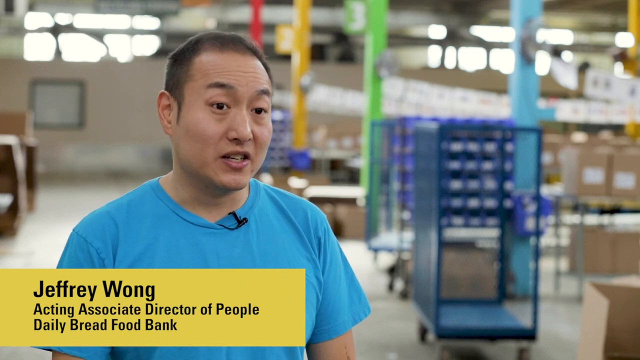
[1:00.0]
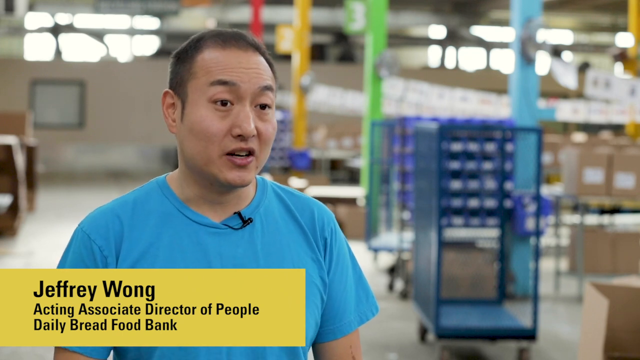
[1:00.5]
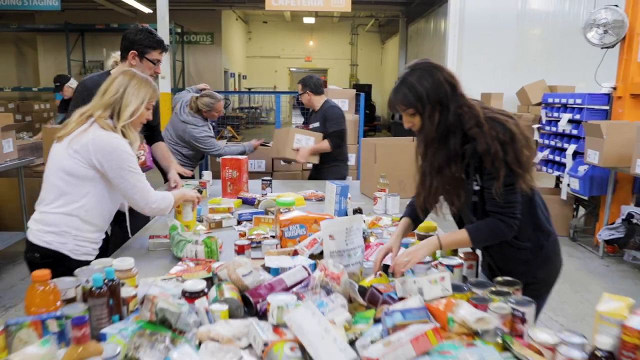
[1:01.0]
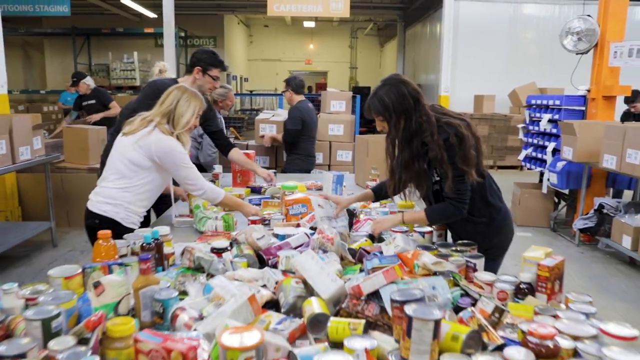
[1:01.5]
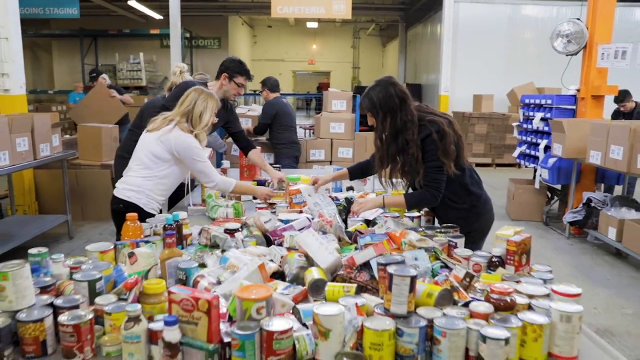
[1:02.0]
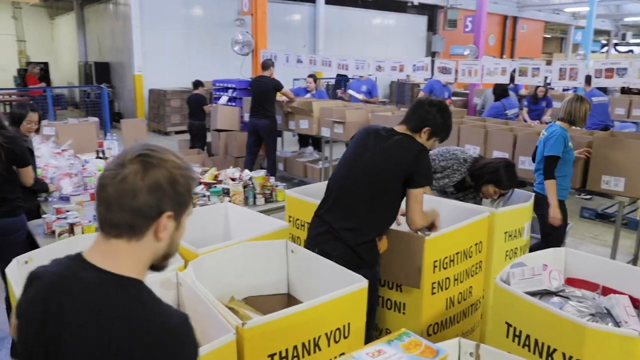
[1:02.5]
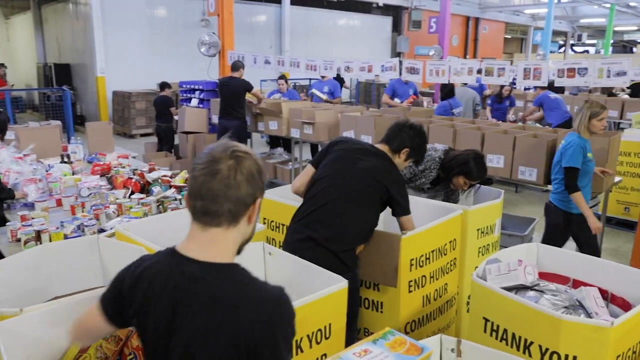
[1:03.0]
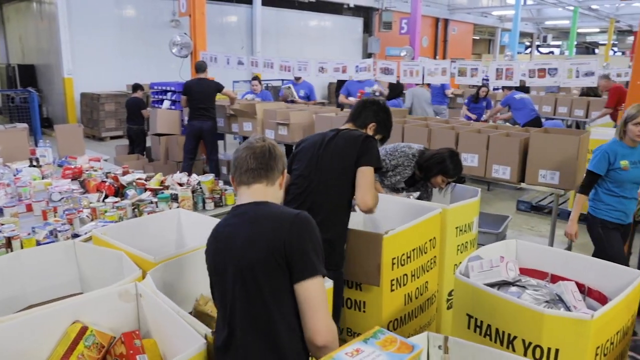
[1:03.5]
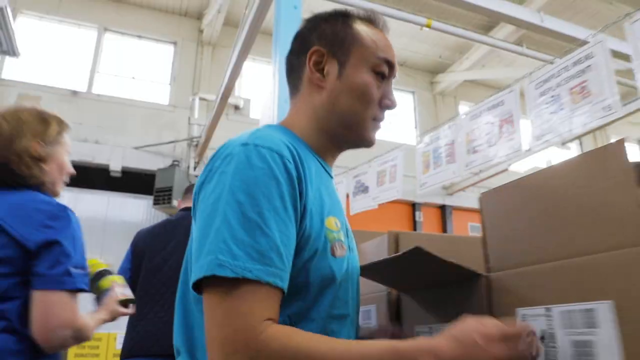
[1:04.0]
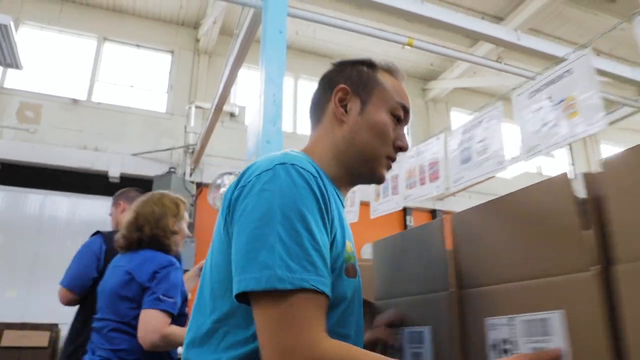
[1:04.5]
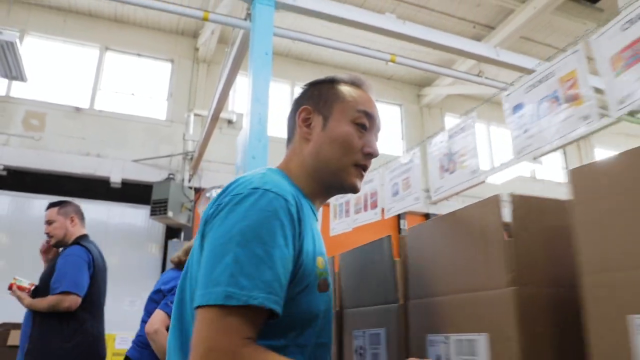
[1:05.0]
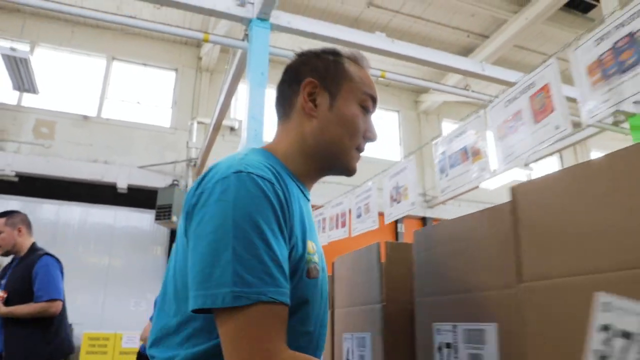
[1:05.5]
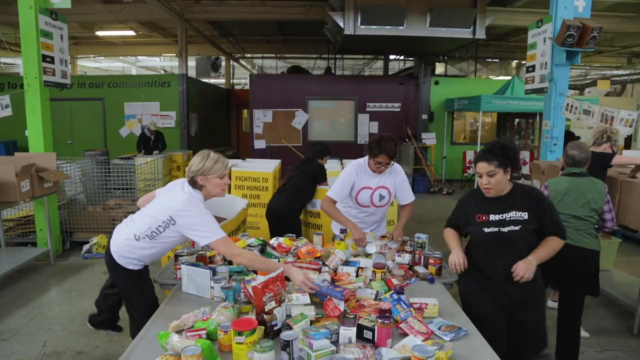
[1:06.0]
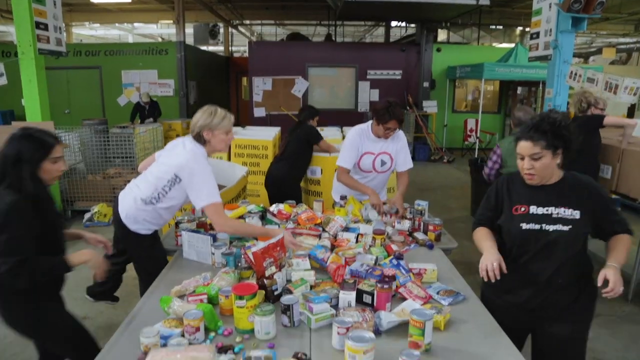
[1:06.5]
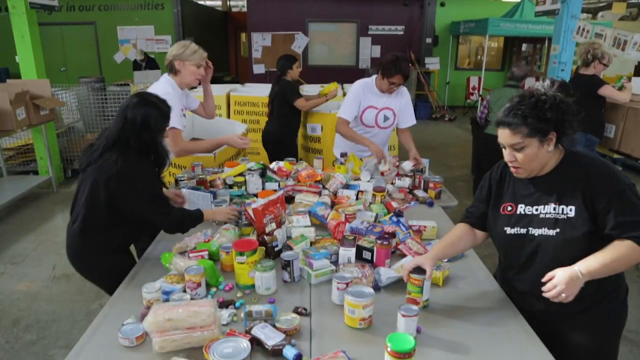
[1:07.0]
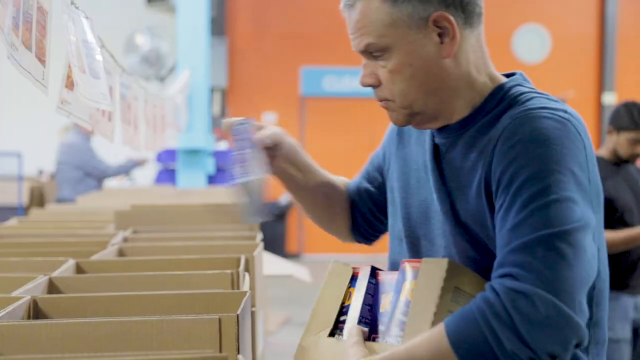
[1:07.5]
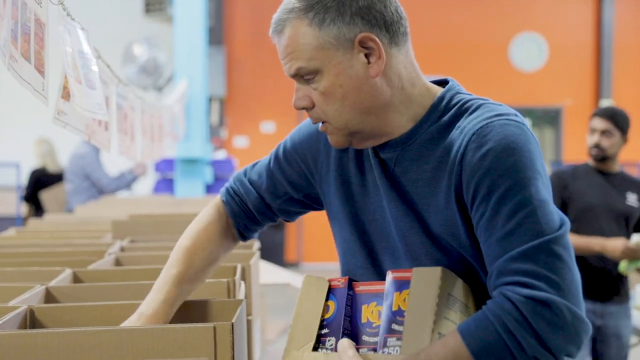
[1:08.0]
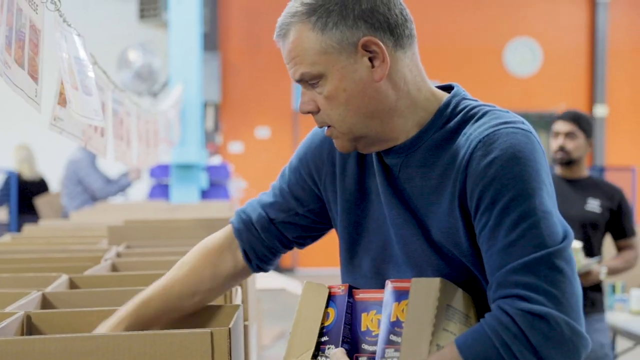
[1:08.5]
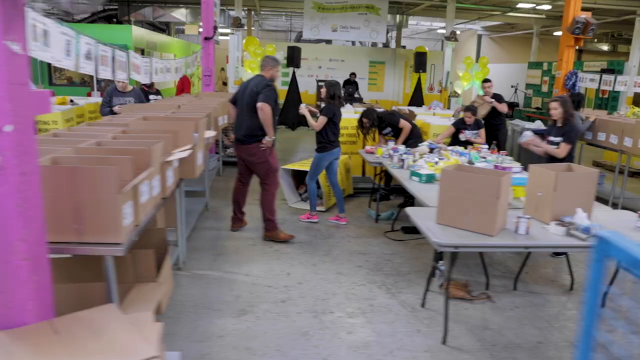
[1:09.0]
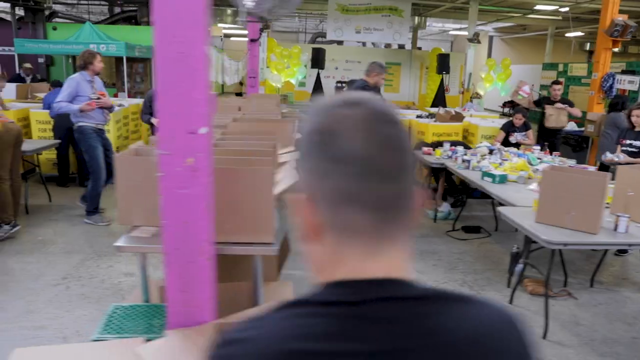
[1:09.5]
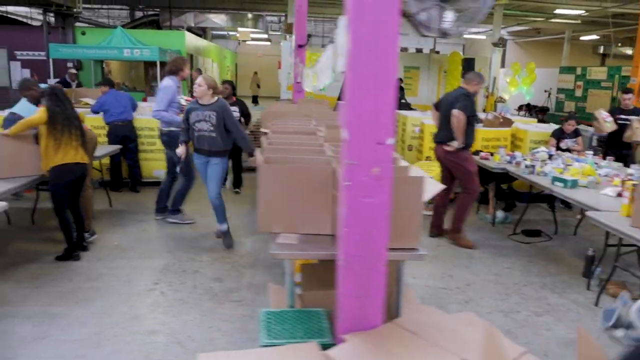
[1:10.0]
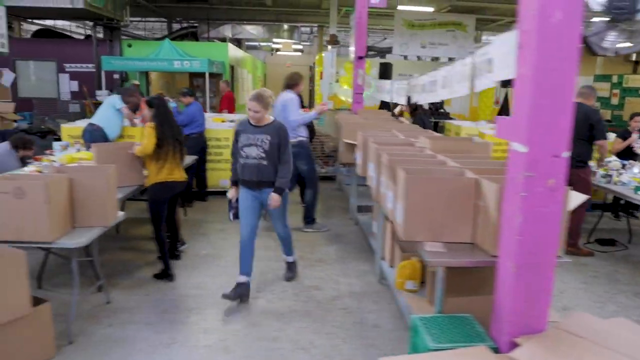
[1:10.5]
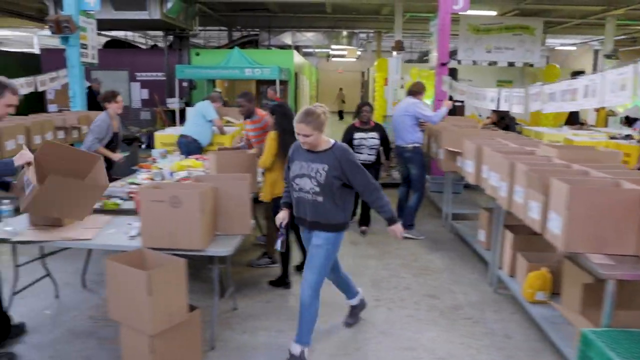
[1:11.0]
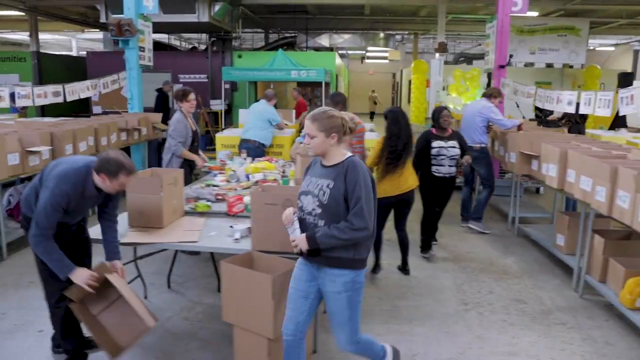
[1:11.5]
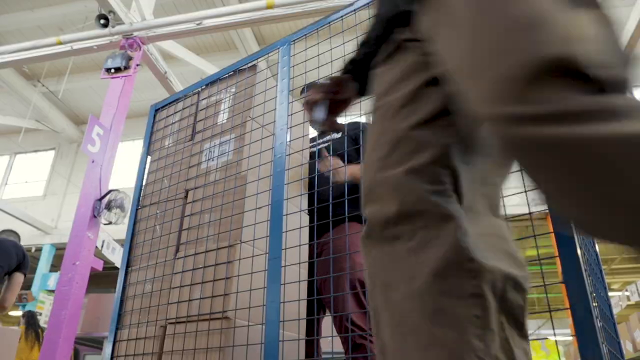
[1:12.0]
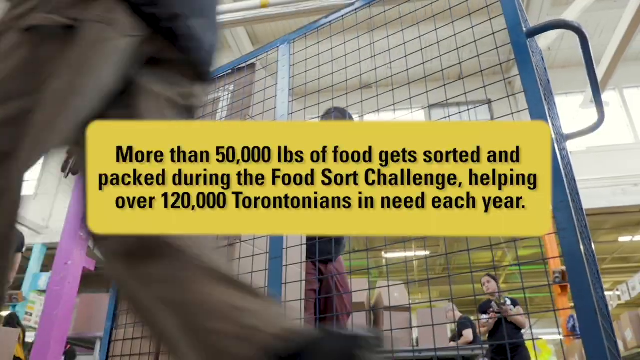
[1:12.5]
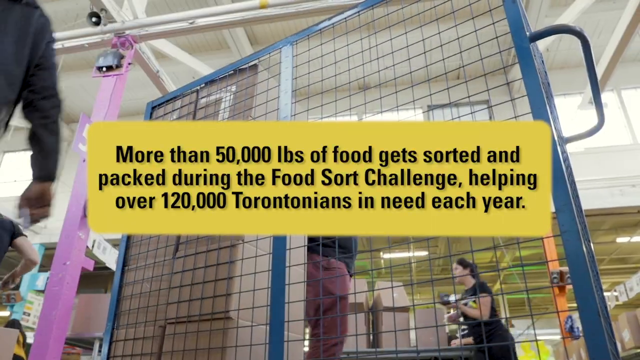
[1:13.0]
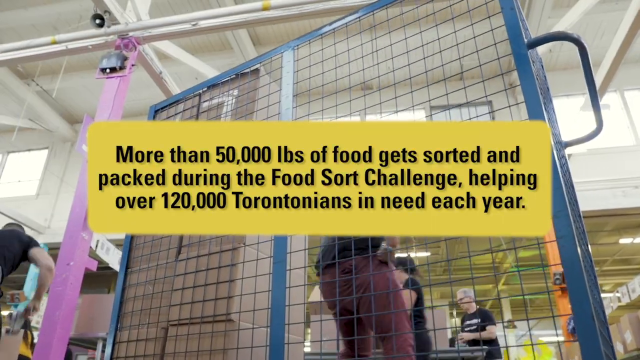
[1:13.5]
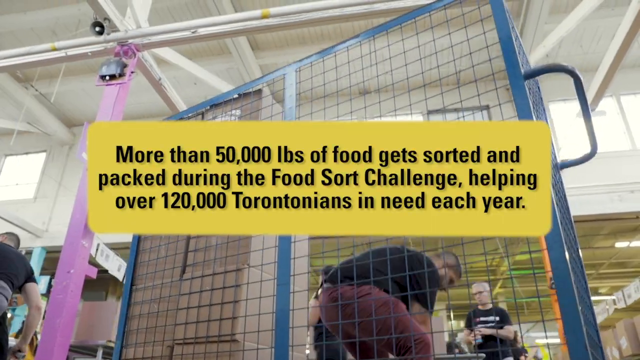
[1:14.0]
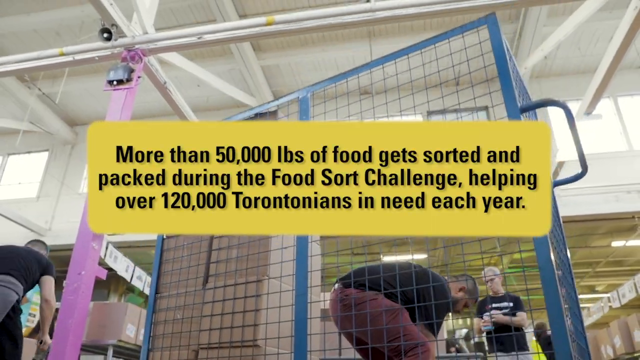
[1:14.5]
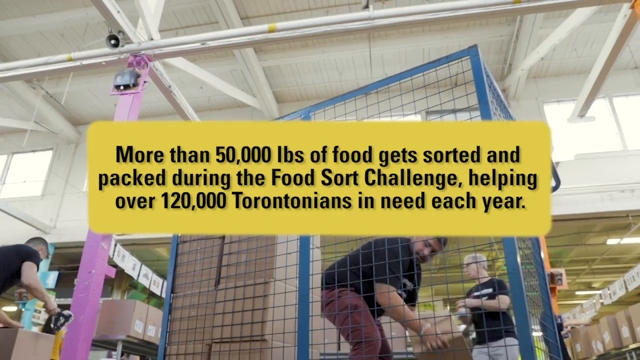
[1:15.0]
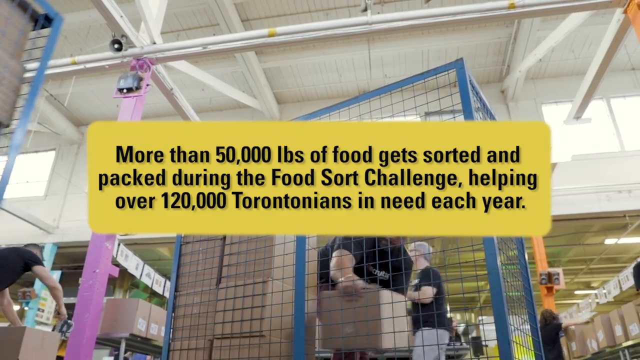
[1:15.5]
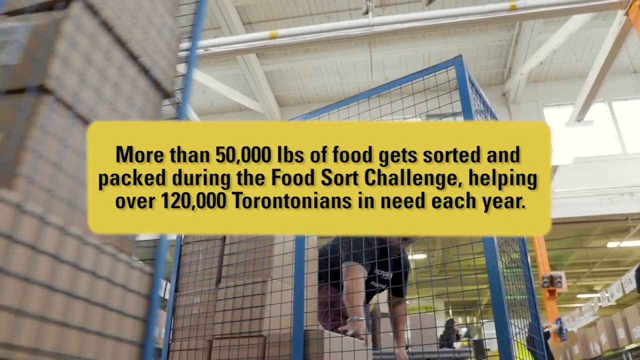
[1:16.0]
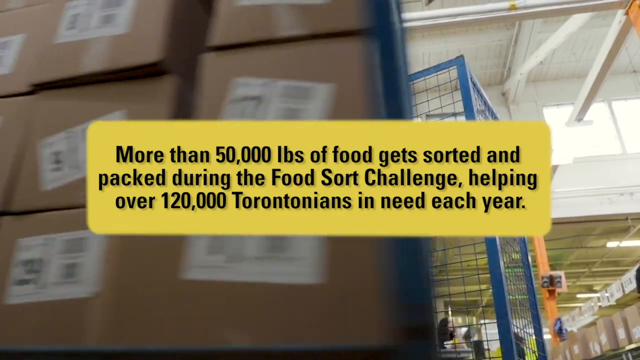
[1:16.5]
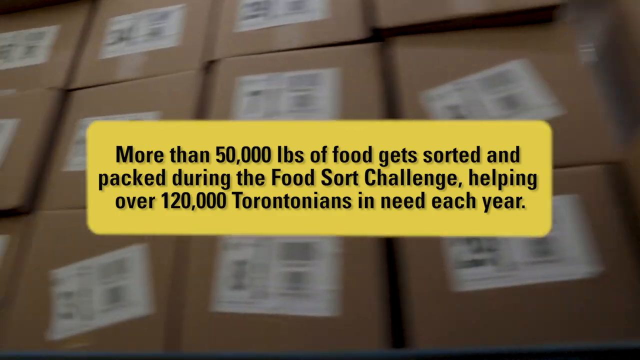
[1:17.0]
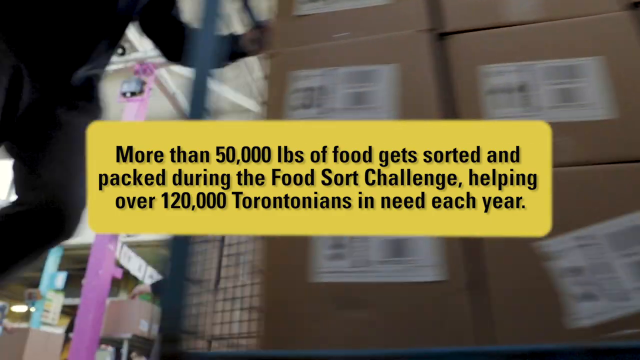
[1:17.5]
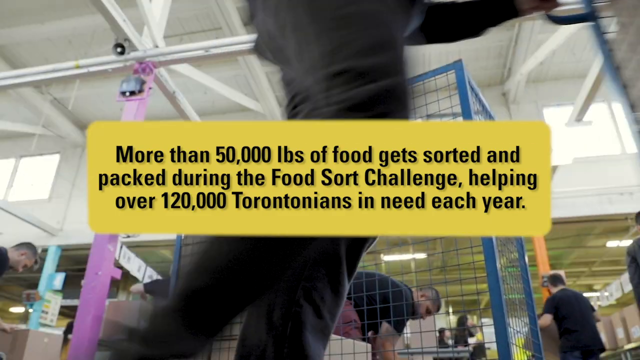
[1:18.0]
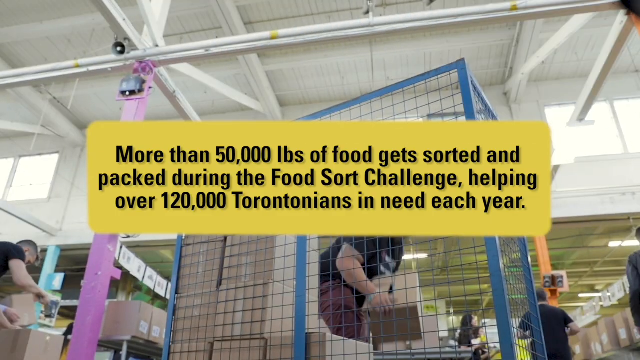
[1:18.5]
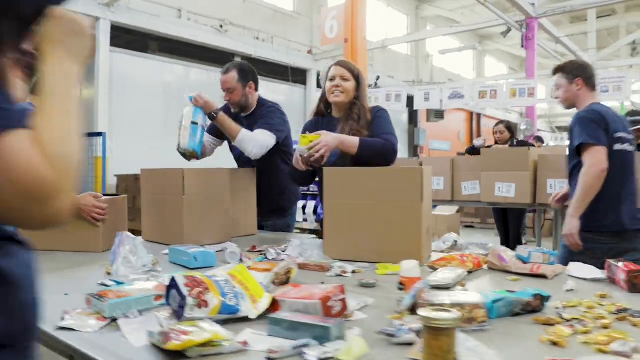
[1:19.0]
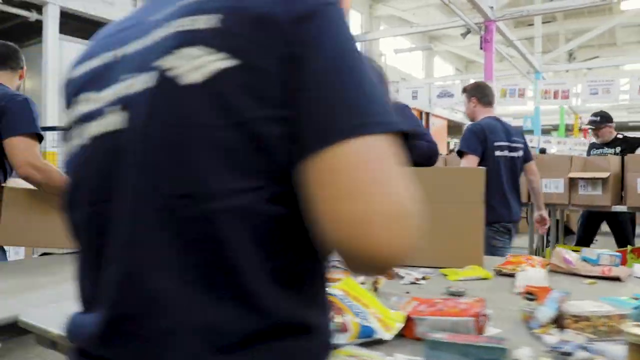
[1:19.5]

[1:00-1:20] An Asian-looking man, who seems possibly of mixed heritage judging by his slightly different eyes and facial structure, wears a light blue short-sleeved shirt with a microphone attached to the bottom front of his collar. In the bottom left corner, black text in a yellow rectangle says "Jeffrey Wong, acting associate director of People Daily Bread Food Bank". He is talking either to the camera or to somebody off camera; it looks like he is being asked a question and is answering. The scene switches to a large gray-top table holding many food items, including different boxes and cans. Two females and one male are standing near the table, appearing to sort or look through the items. Next, more people in a warehouse-looking setting handle boxes; tons of food is on the table behind the boxes on the left, and in the back right background there are lots of brown cardboard boxes with many people standing around them, taking things out and putting them in. Then an Asian man, either another one or the same man in the light blue short-sleeved shirt, walks along some cardboard boxes, appearing to look in them.